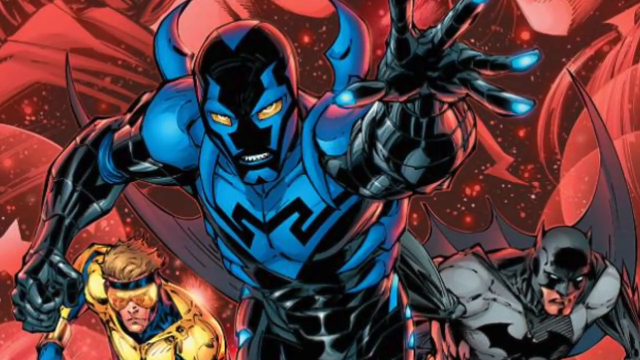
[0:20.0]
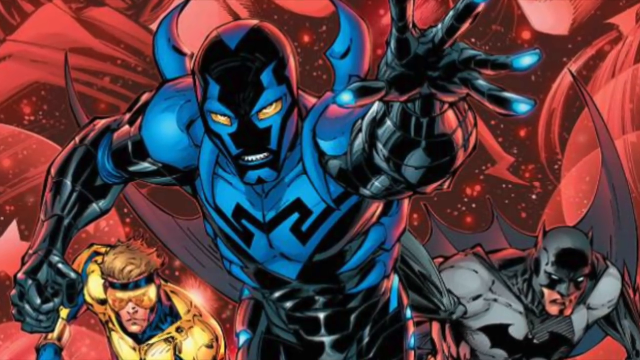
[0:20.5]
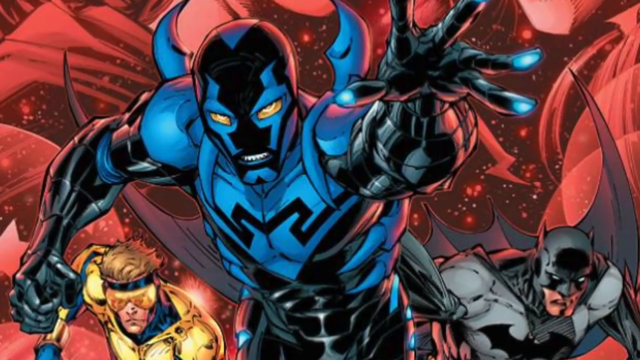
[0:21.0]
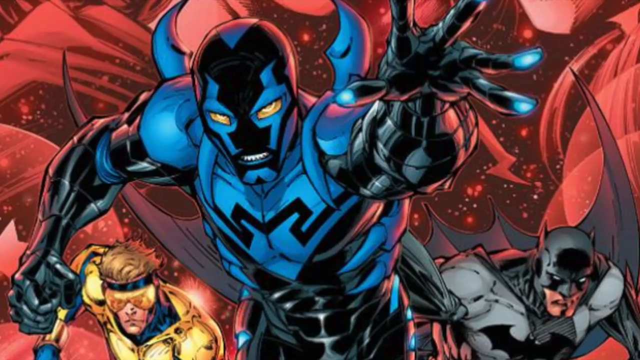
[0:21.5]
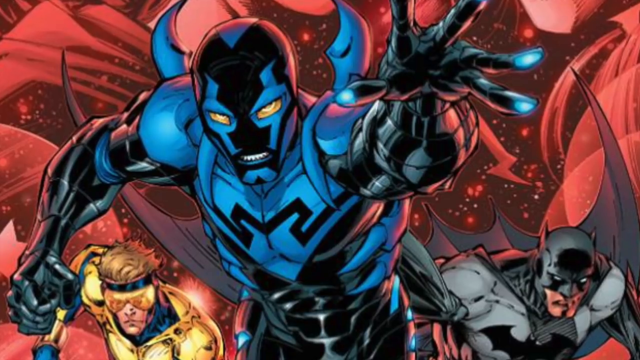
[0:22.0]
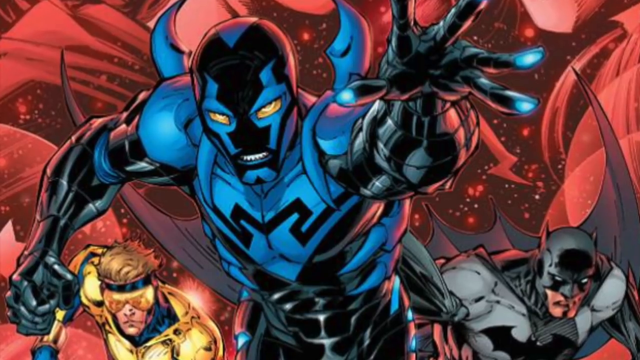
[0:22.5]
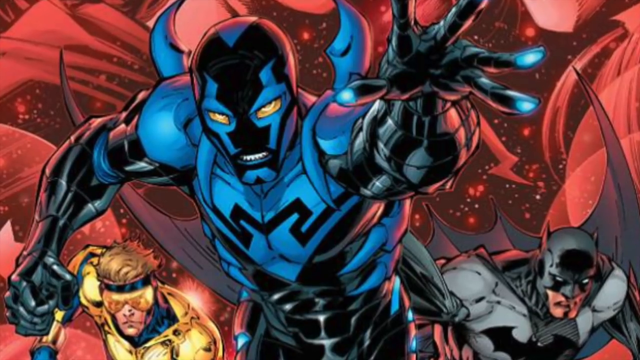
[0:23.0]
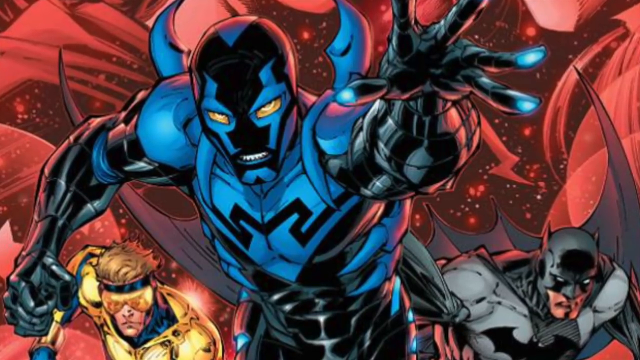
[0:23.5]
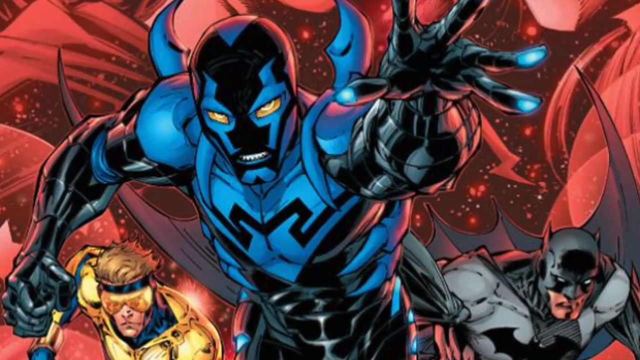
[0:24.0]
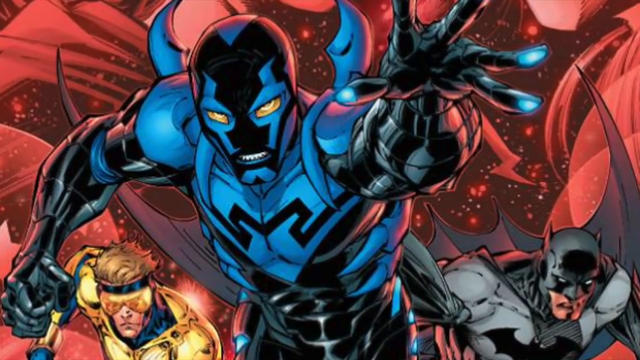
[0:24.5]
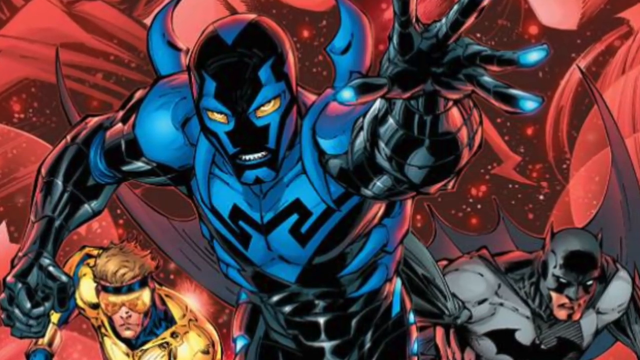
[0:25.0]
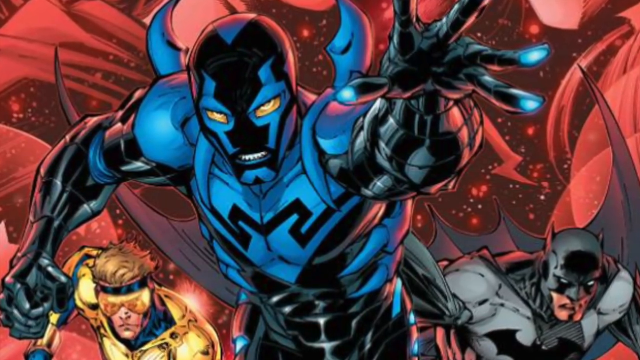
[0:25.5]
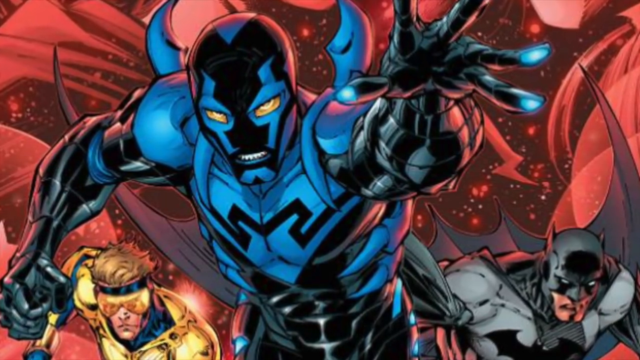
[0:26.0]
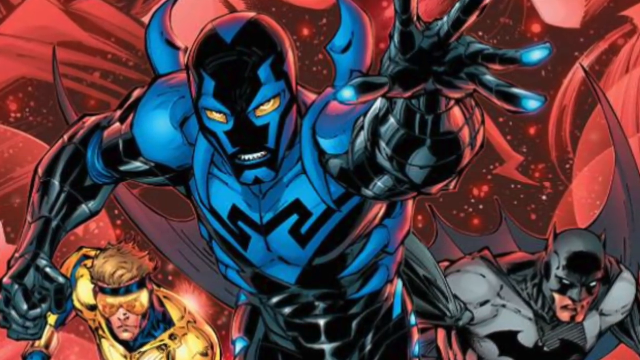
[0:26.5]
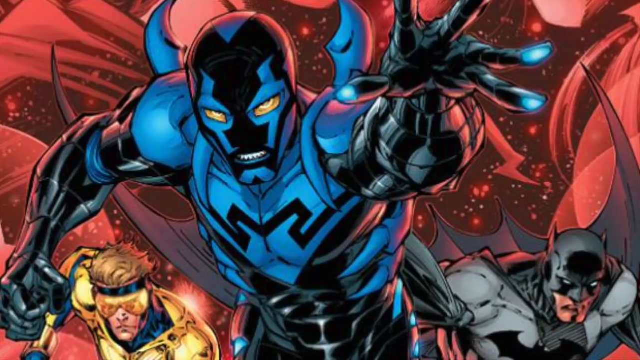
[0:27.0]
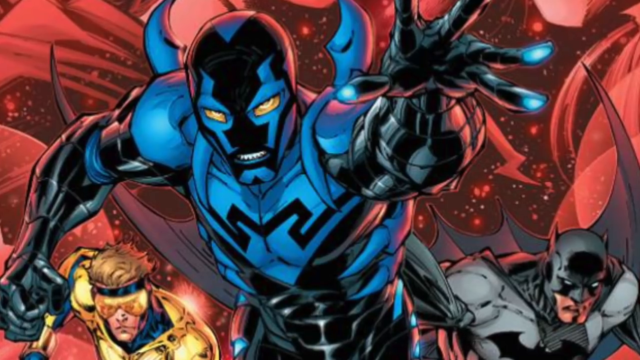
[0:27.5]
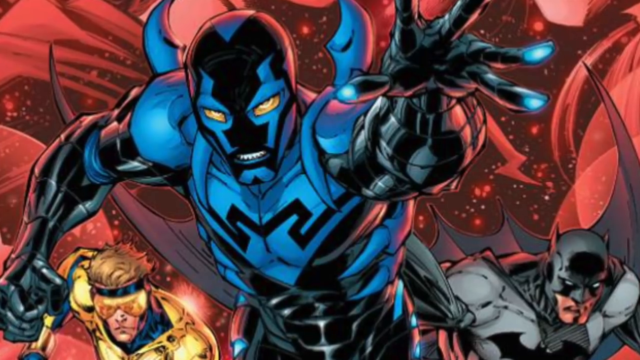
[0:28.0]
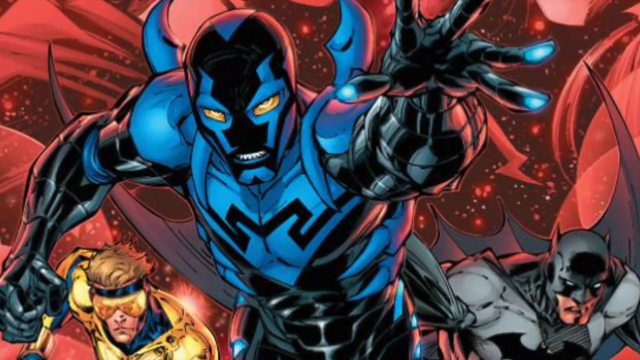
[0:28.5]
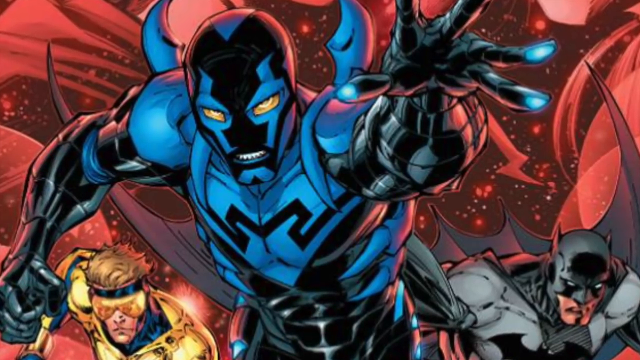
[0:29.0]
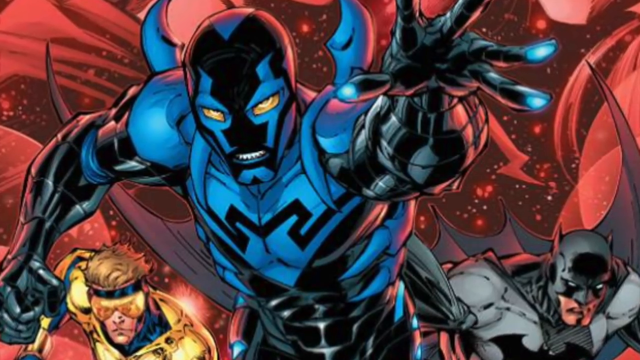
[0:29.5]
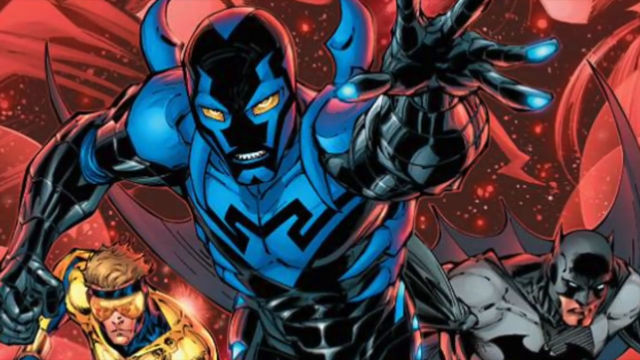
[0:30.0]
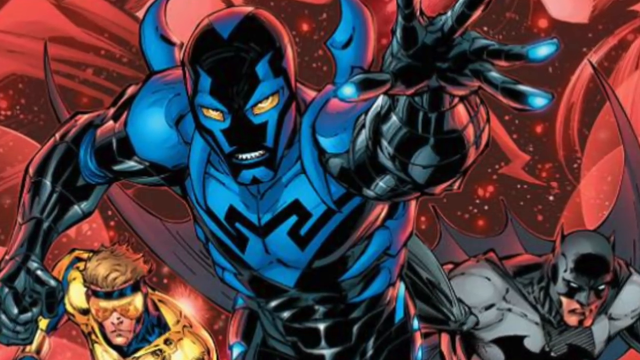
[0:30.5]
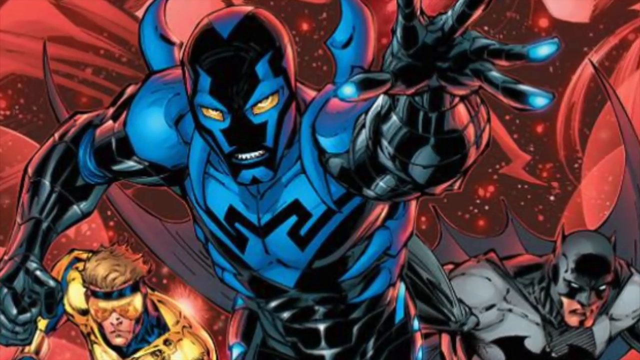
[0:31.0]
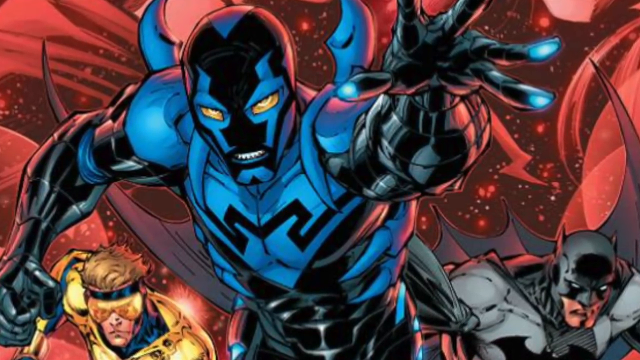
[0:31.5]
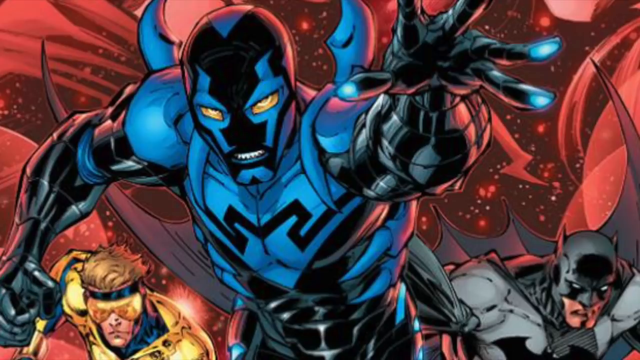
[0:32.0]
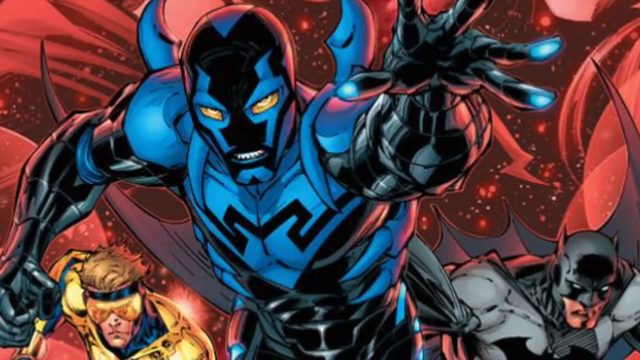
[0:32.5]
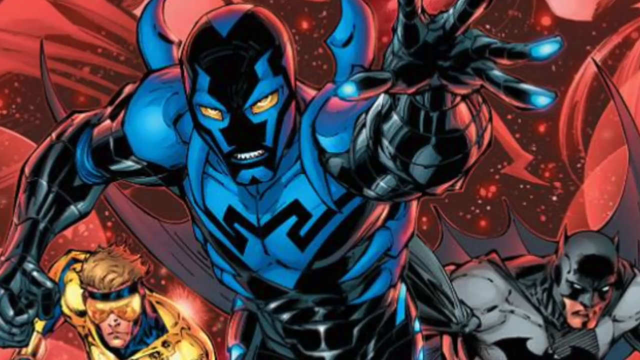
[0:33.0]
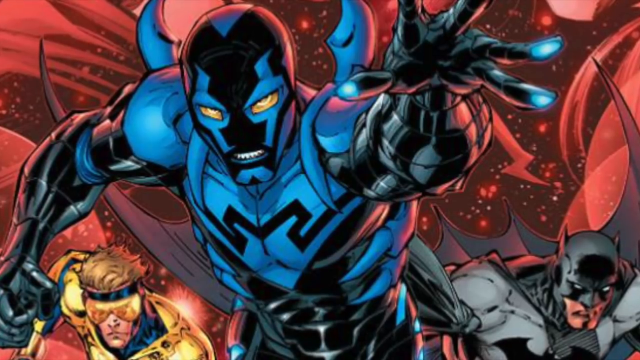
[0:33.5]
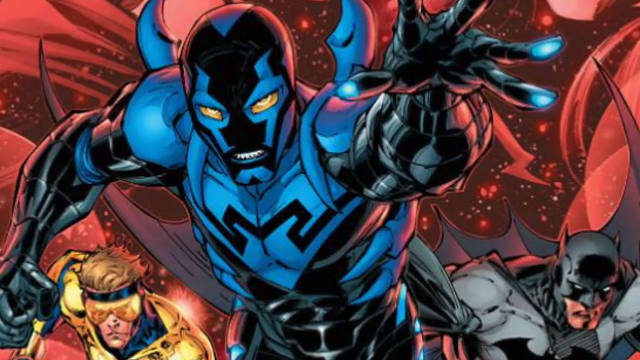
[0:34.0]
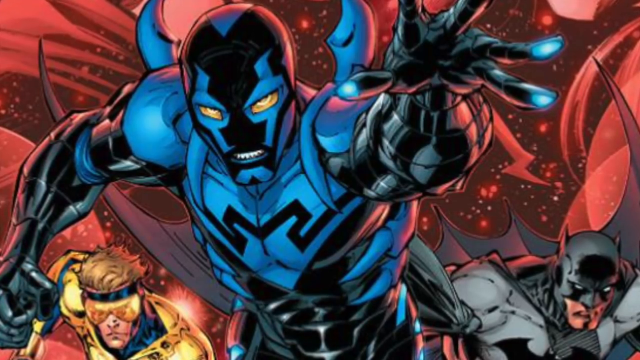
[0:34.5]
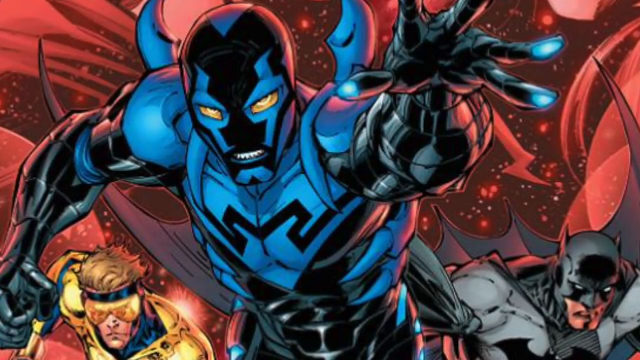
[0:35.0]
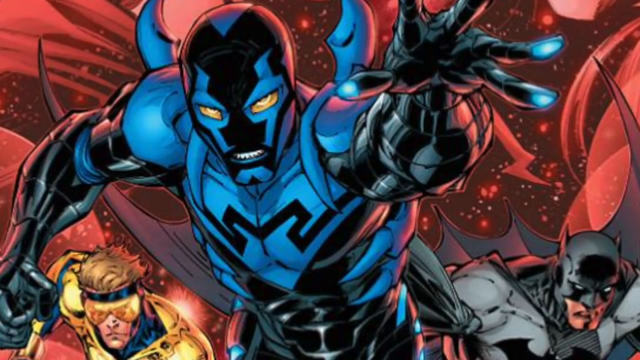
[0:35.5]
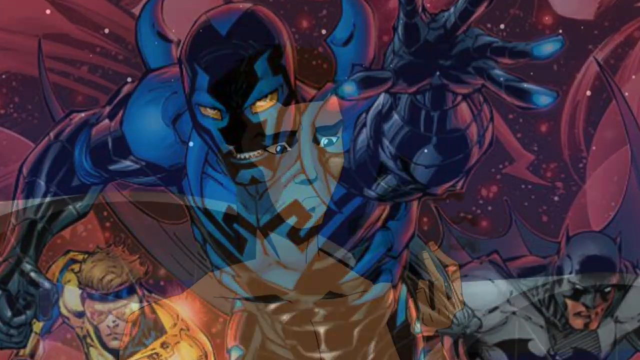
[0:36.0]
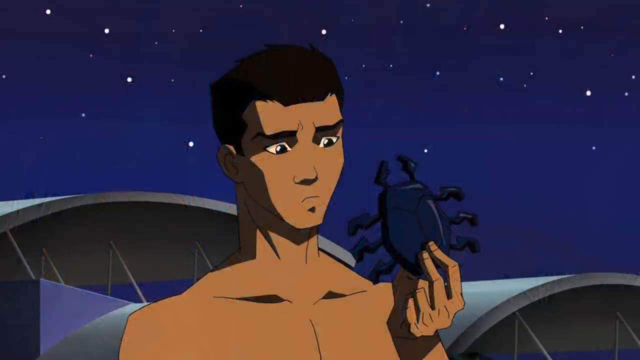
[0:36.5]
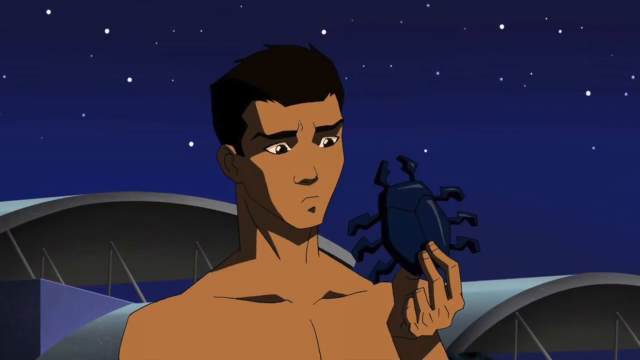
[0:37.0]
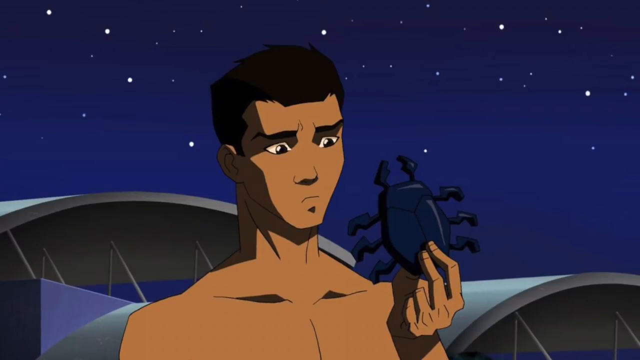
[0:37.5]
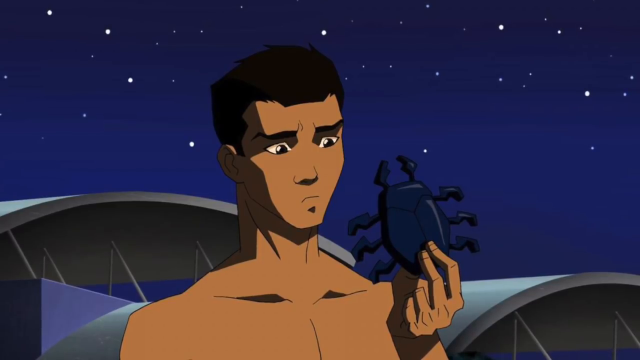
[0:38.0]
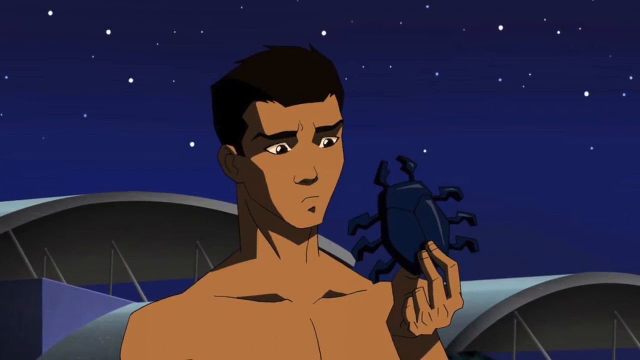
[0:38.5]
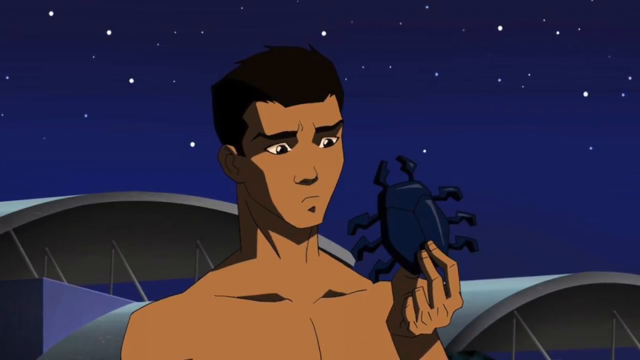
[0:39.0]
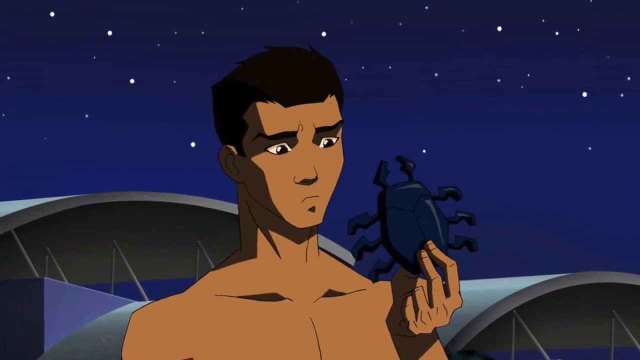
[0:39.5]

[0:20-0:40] The three figures continue charging forwards in the red universe: the big blue and black figure with his arm outstretched, with Cyclops and Batman on either side of him. The scene then changes to a young man who appears to be mixed race, with black hair and brown eyes. The setting looks like a dark night, potentially in space, with cylinder buildings behind him. He is seen from the neck up and a bit of his chest, and he is not wearing clothing on his upper body. He holds what looks like a blue scarab in front of him and looks up at it with a quizzical expression, as if seeing it for the first time.